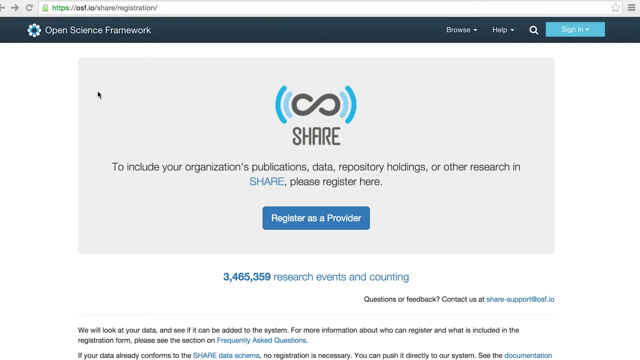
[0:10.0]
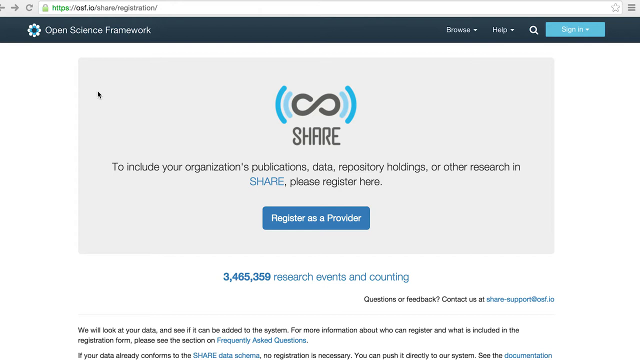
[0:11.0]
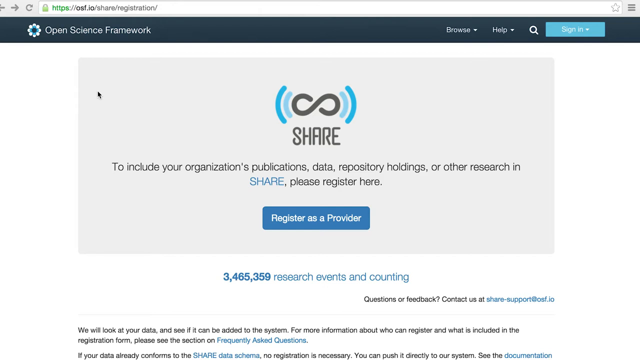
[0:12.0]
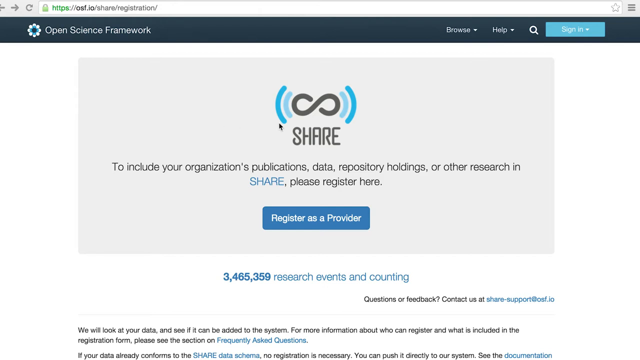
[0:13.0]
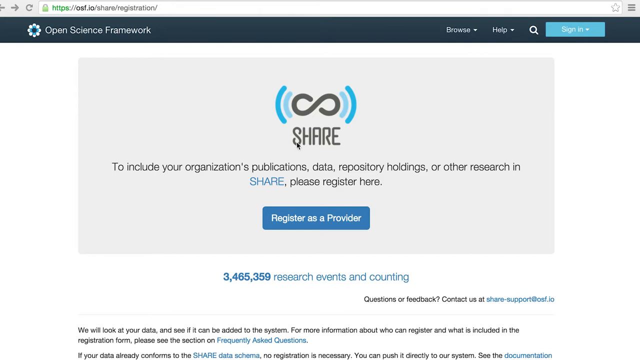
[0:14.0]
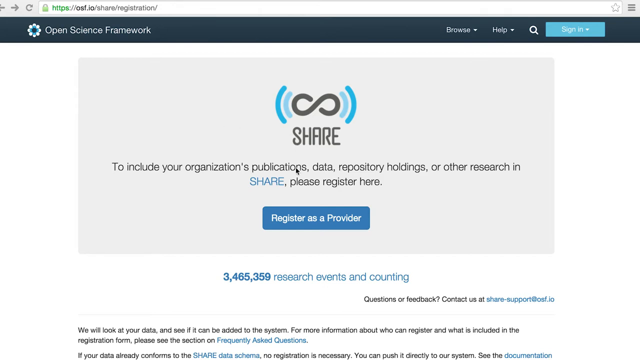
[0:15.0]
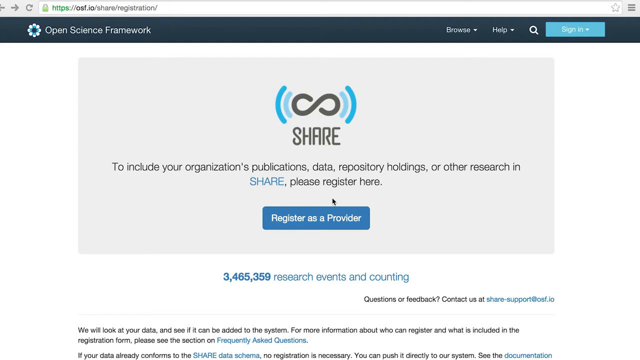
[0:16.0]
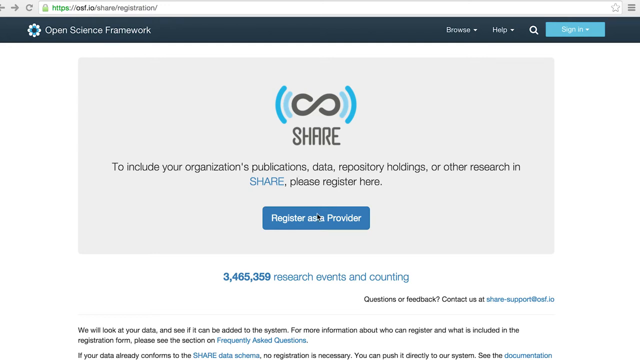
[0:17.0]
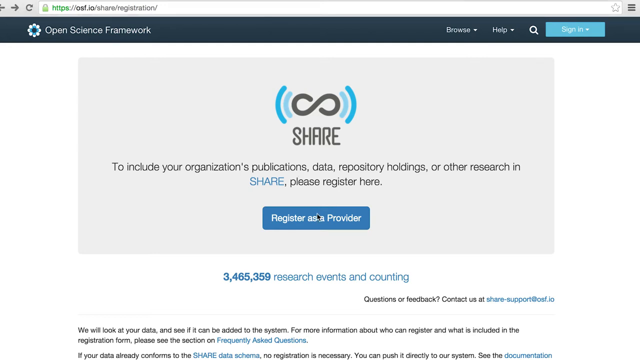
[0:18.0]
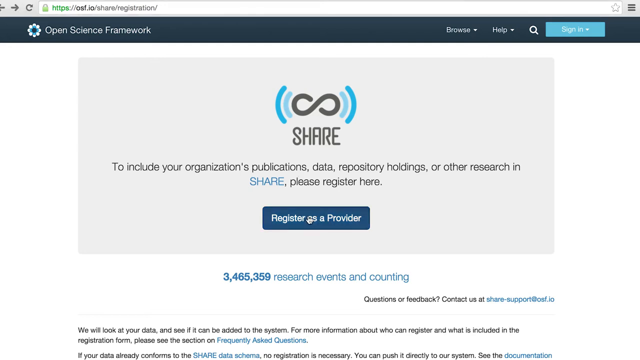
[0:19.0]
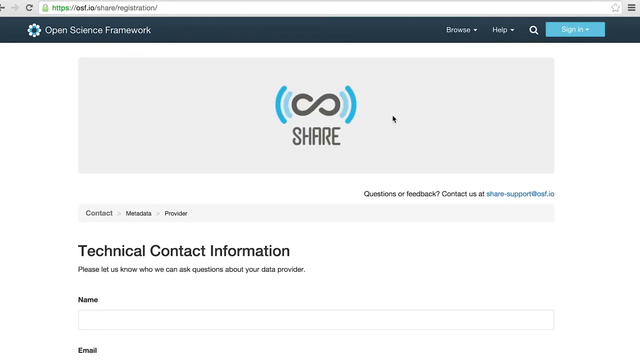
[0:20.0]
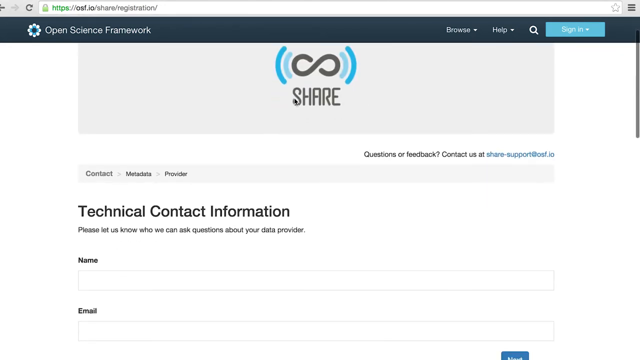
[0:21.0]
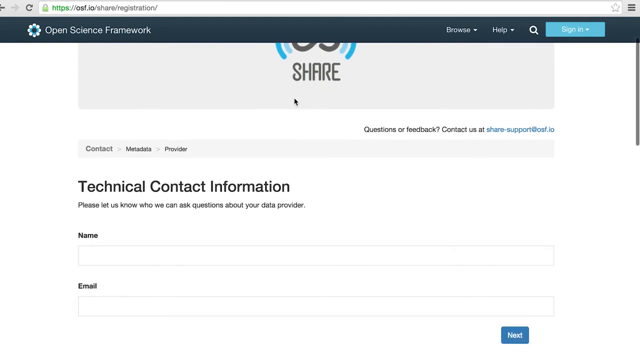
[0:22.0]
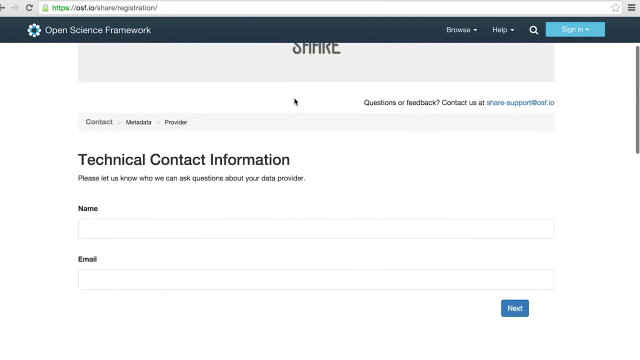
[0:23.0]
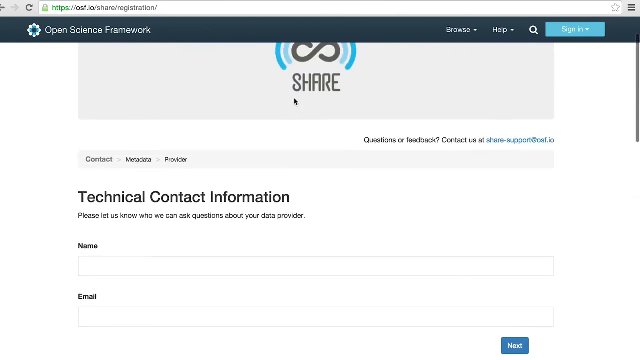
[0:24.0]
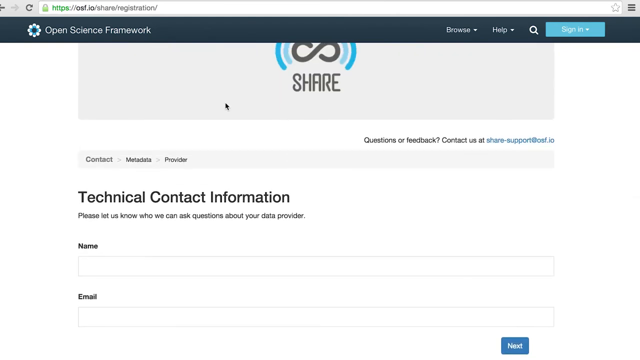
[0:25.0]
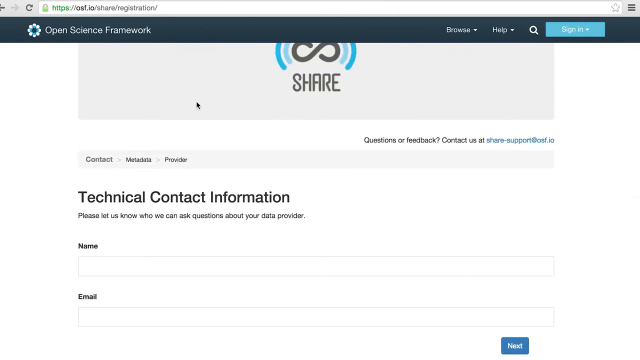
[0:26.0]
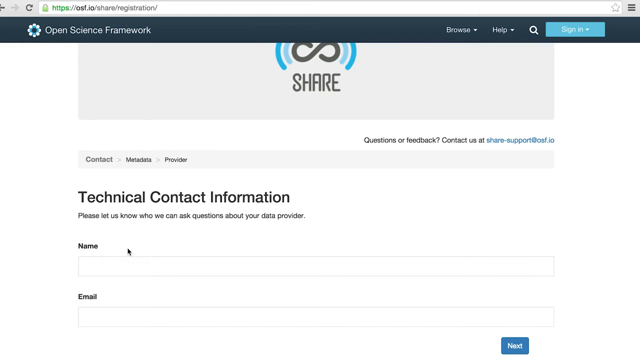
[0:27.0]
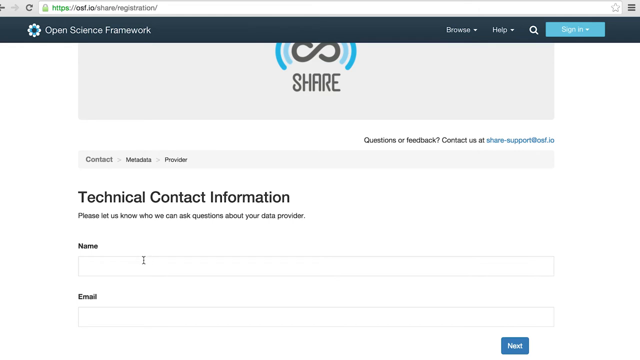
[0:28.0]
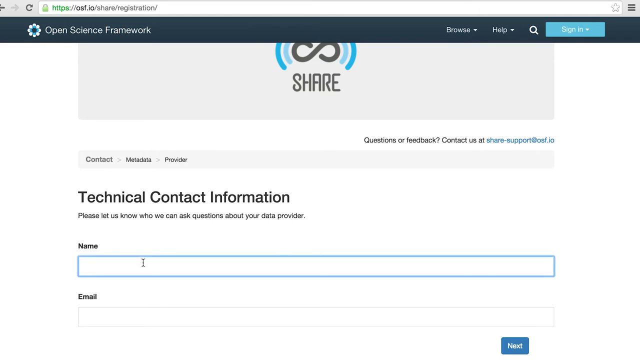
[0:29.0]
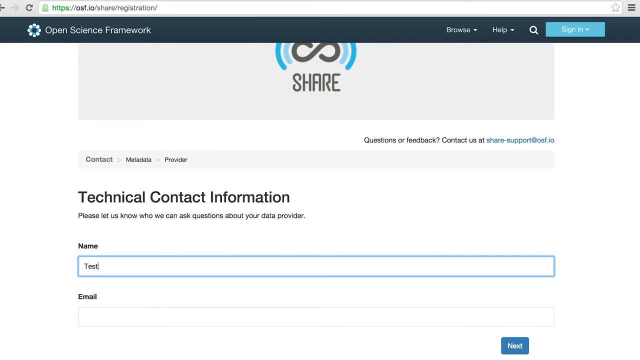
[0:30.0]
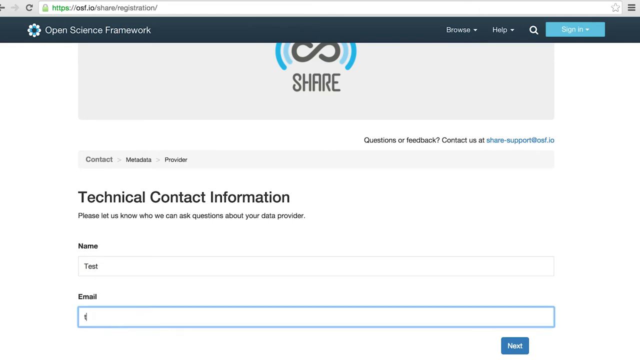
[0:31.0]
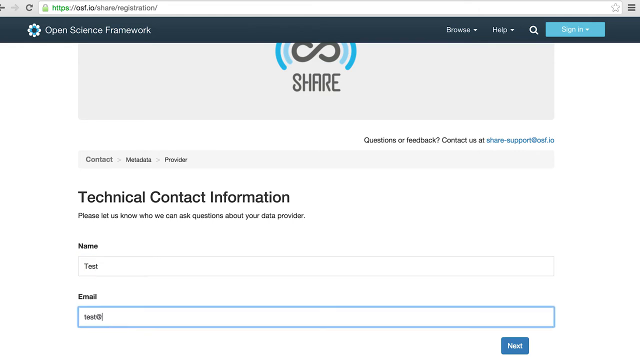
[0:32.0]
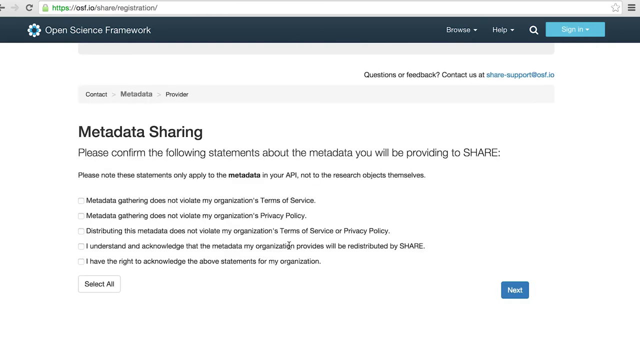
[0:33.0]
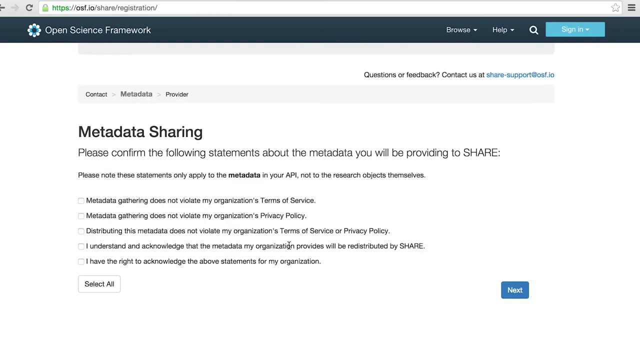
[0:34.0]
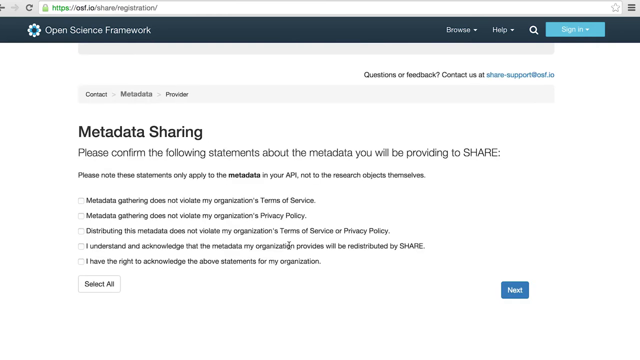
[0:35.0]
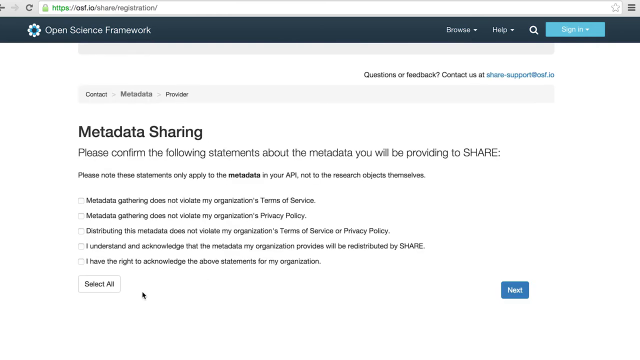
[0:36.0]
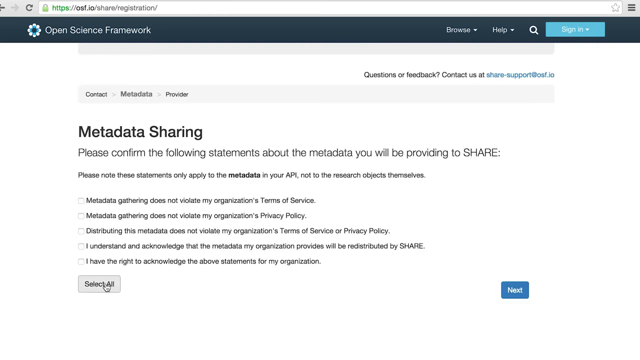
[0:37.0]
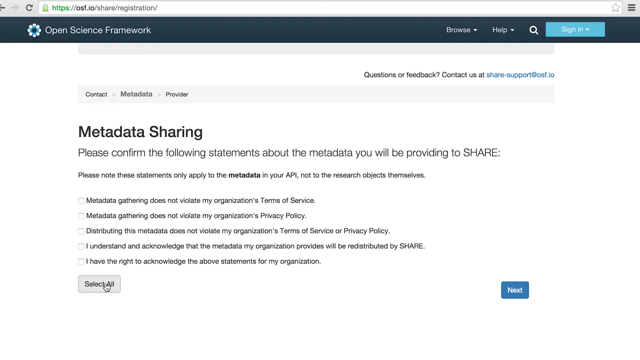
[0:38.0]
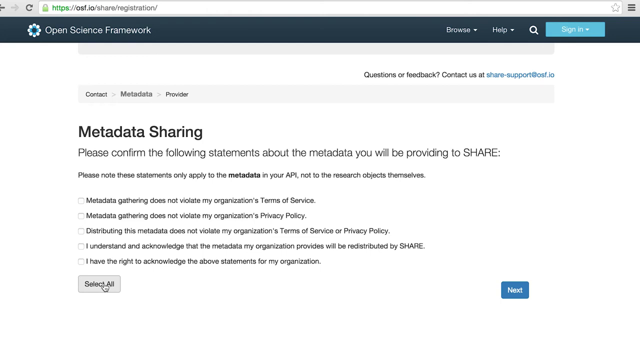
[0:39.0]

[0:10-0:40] The cursor scrolls down the register-as-a-provider page. Fields appear for entering a name and an email, followed by a next button. Further down is a list of statements about the metadata to be provided to SHARE; all the boxes are ticked to agree to the SHARE policy and terms and conditions, and next is pressed. The sign-in page then appears.